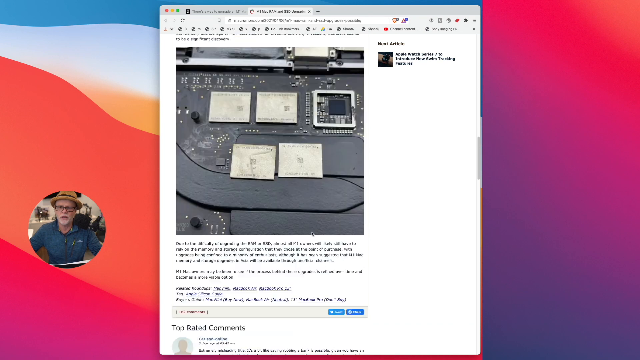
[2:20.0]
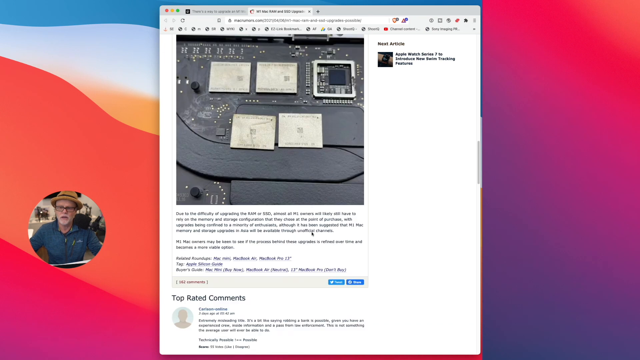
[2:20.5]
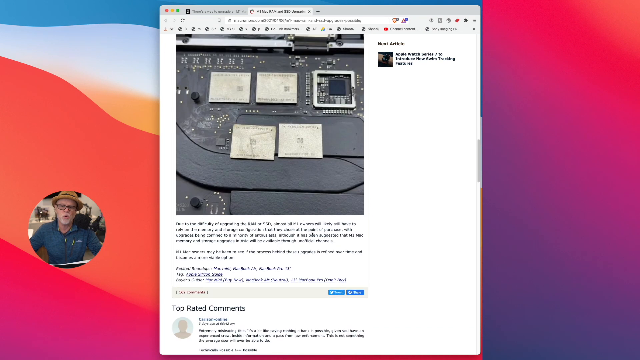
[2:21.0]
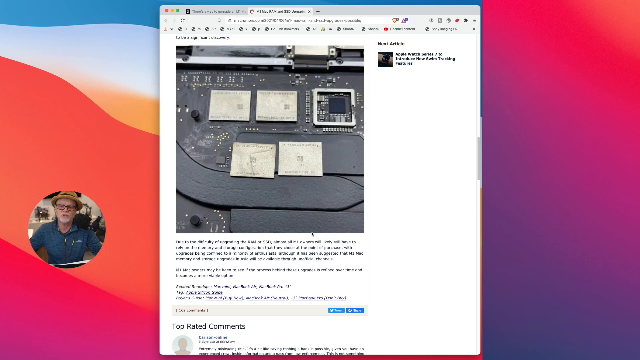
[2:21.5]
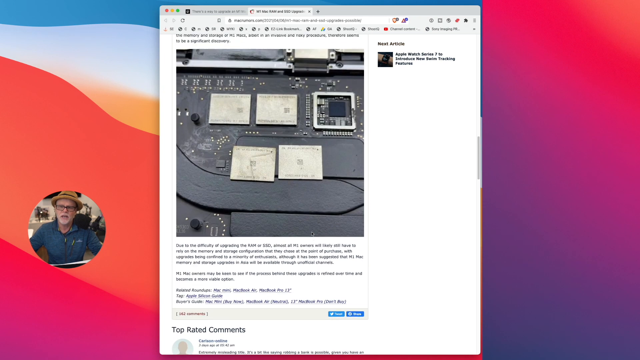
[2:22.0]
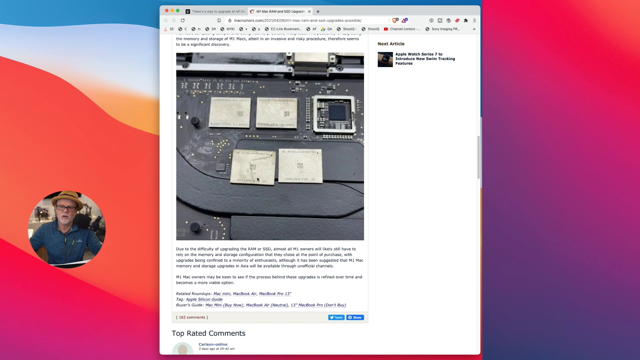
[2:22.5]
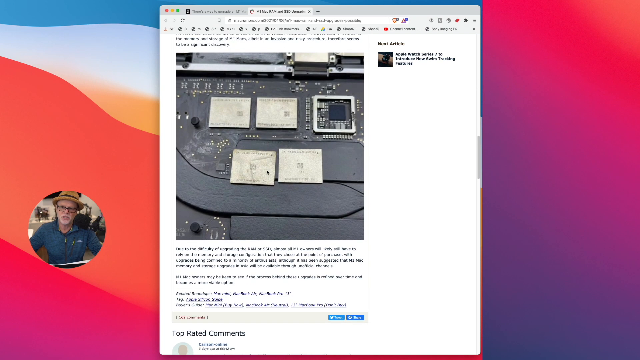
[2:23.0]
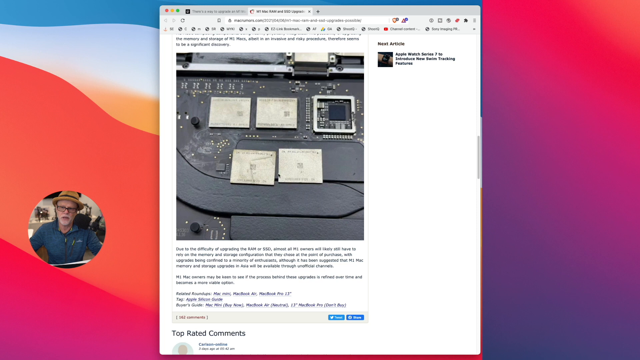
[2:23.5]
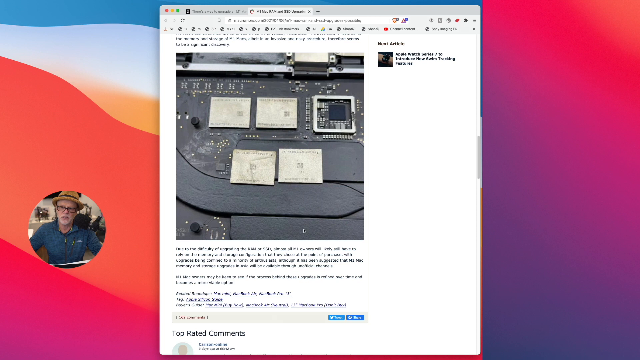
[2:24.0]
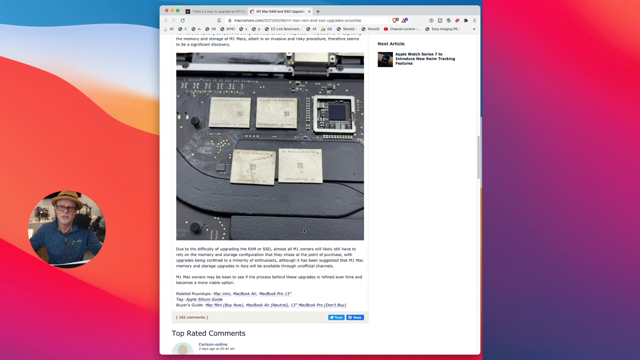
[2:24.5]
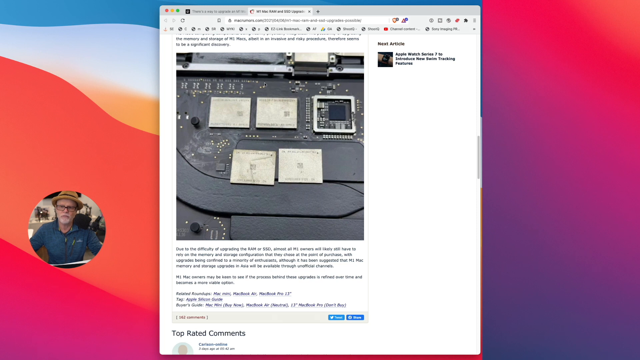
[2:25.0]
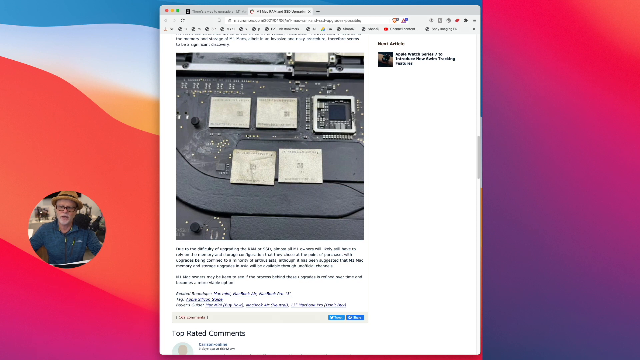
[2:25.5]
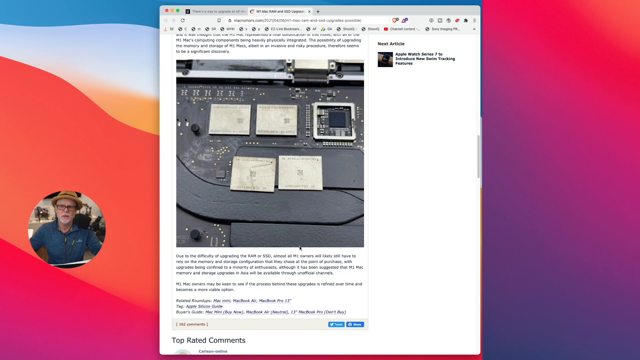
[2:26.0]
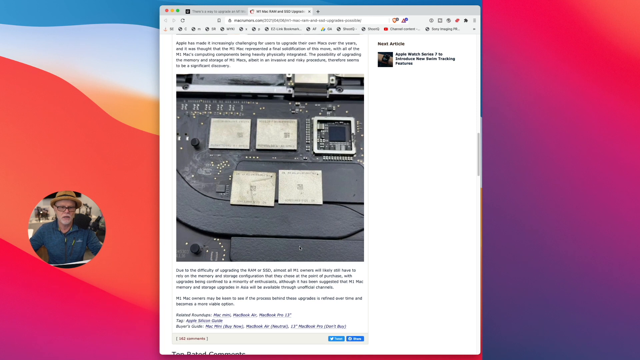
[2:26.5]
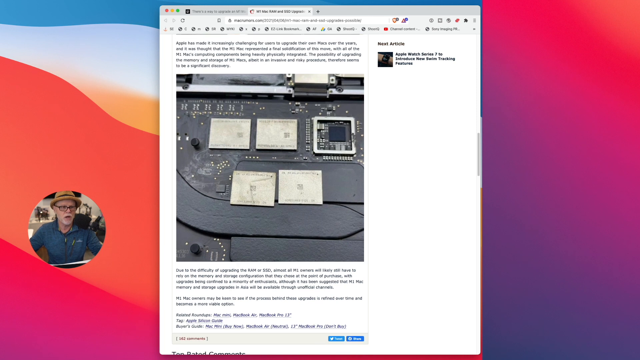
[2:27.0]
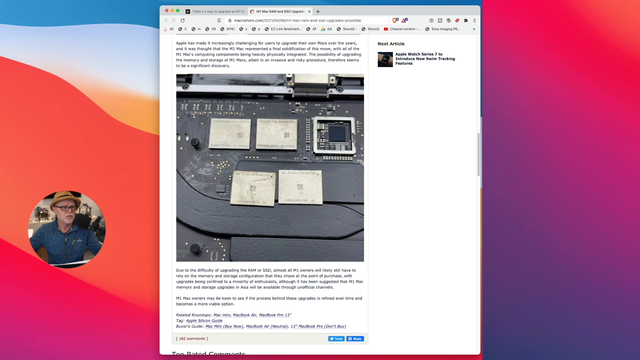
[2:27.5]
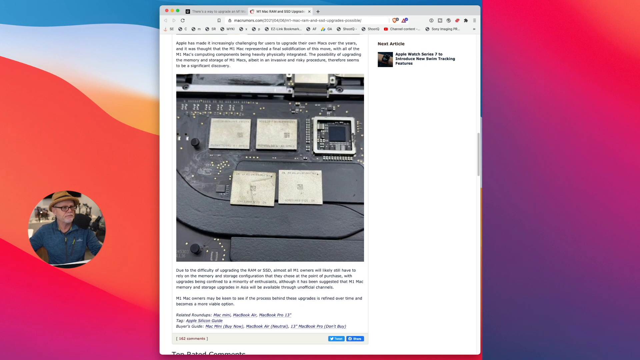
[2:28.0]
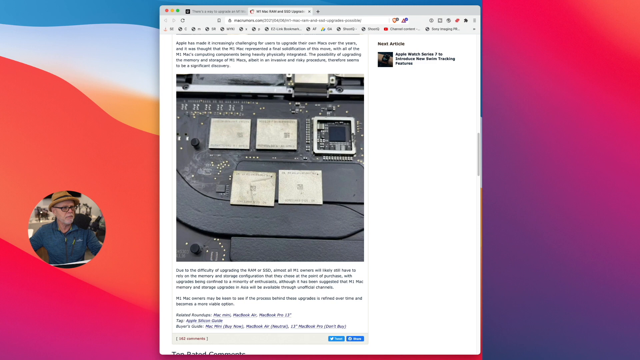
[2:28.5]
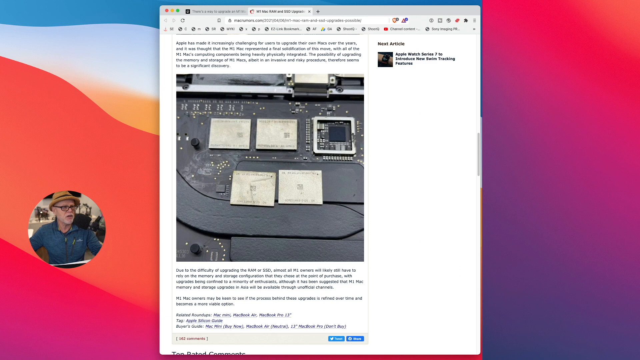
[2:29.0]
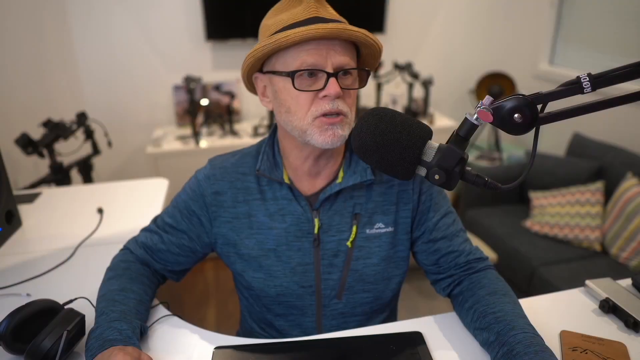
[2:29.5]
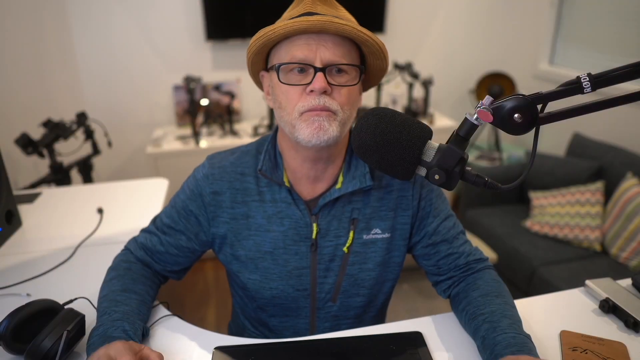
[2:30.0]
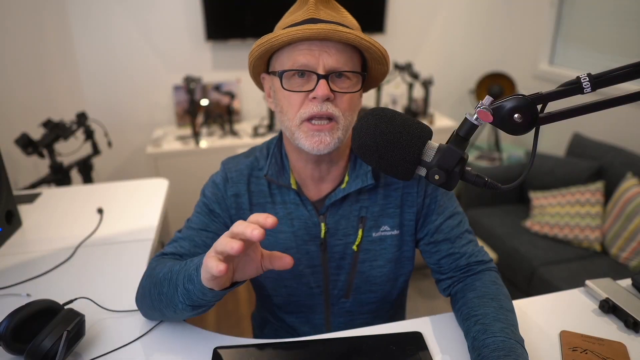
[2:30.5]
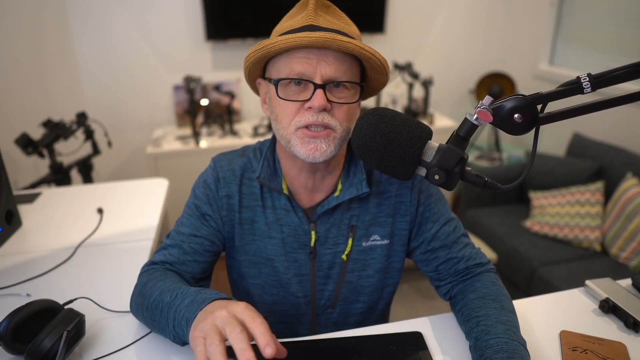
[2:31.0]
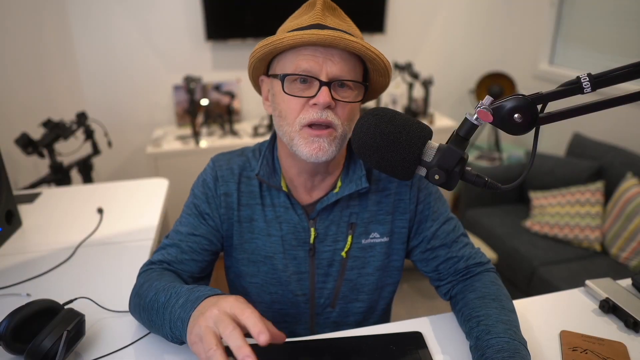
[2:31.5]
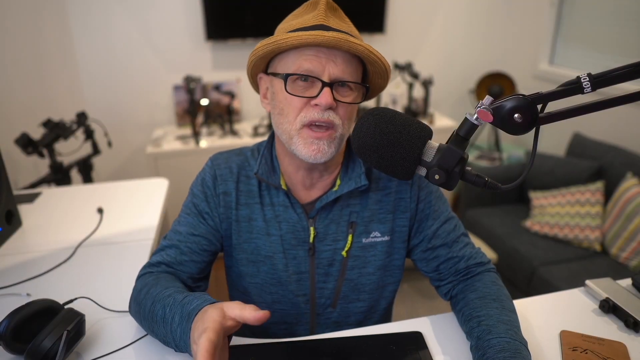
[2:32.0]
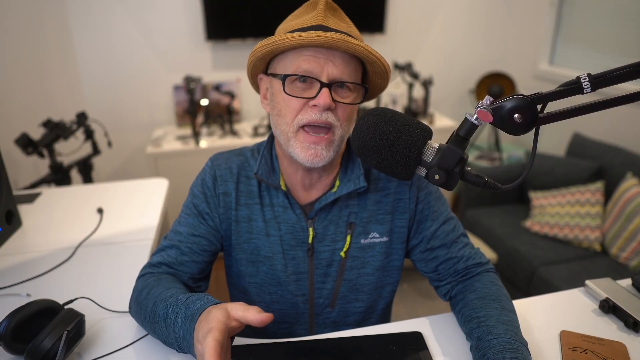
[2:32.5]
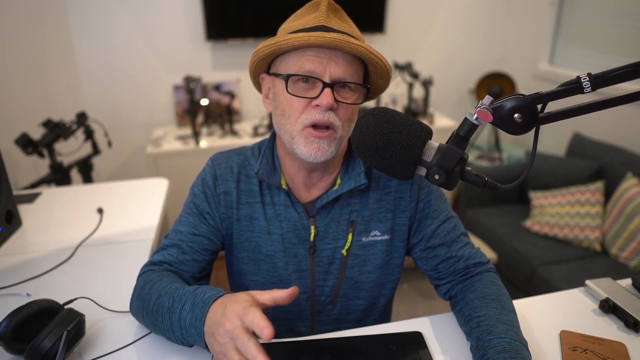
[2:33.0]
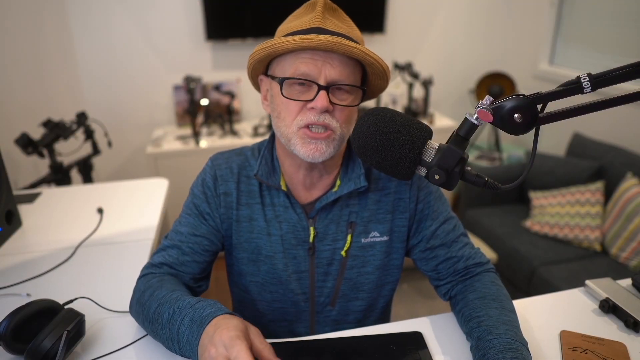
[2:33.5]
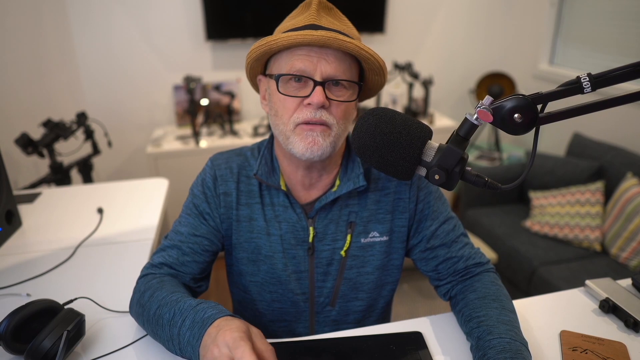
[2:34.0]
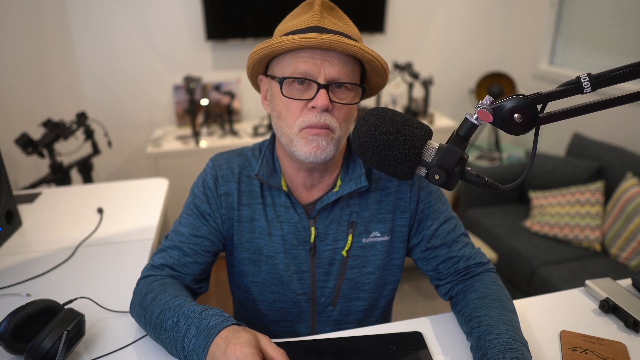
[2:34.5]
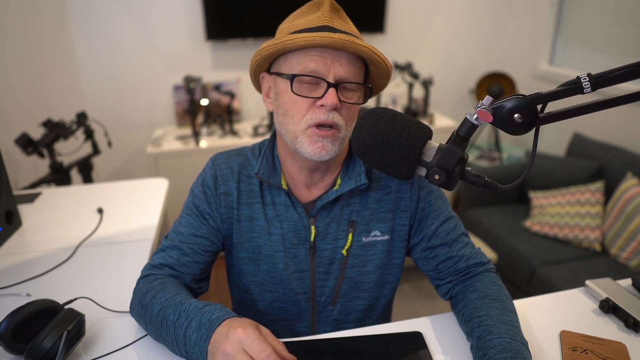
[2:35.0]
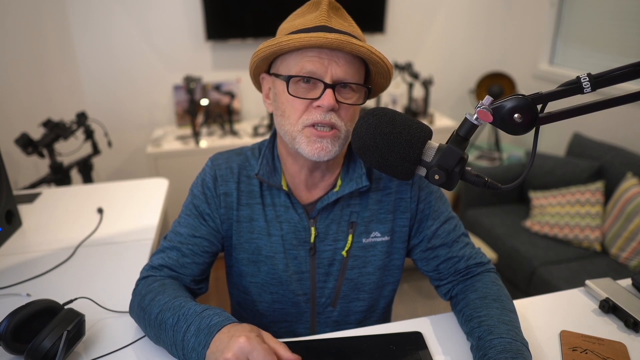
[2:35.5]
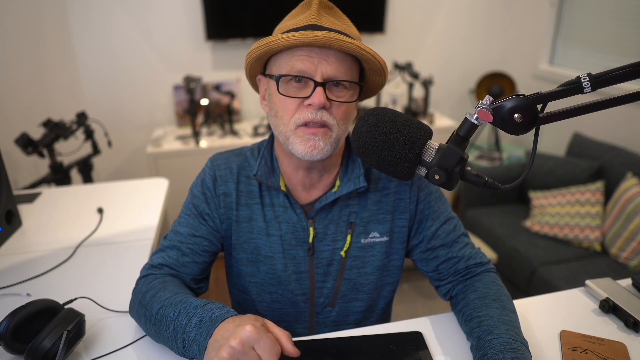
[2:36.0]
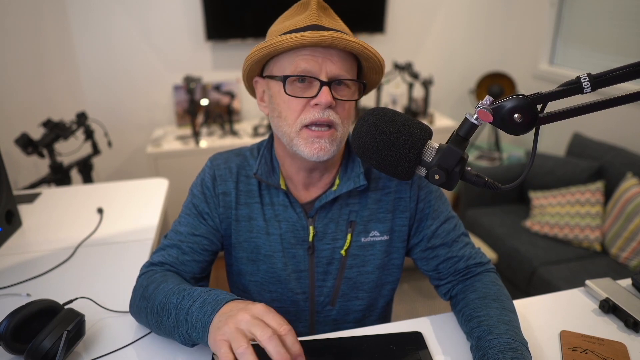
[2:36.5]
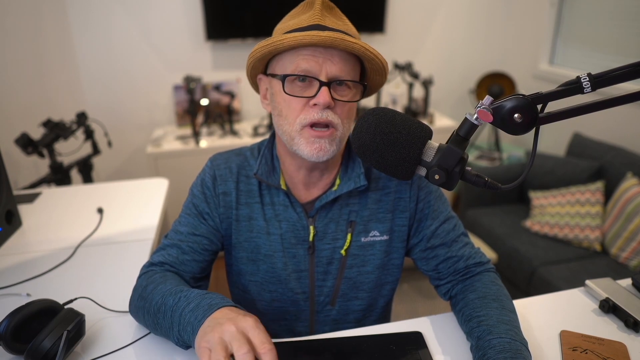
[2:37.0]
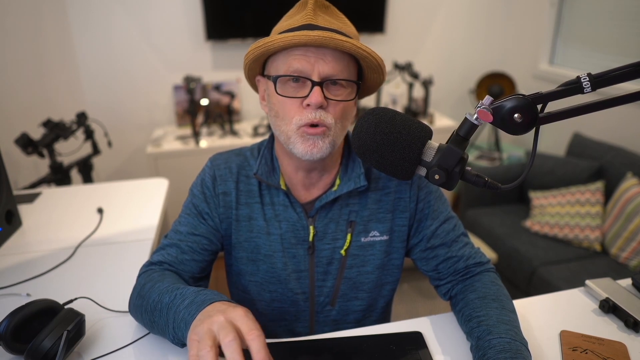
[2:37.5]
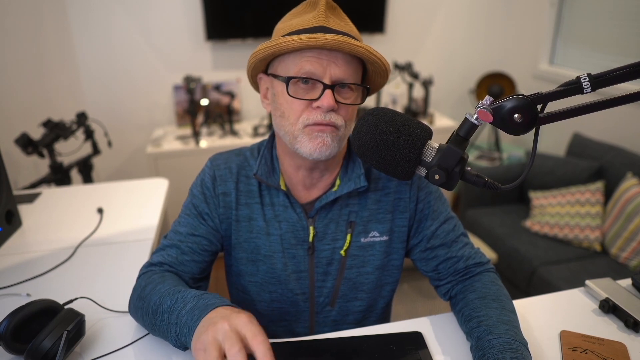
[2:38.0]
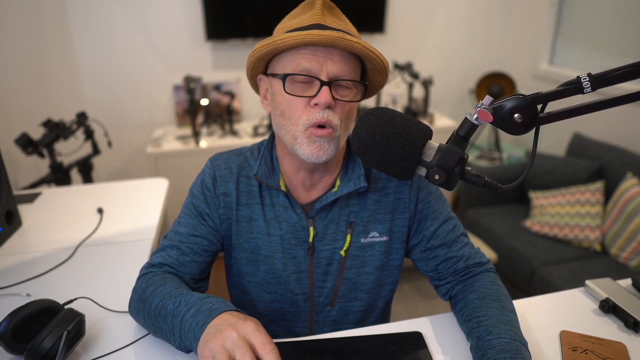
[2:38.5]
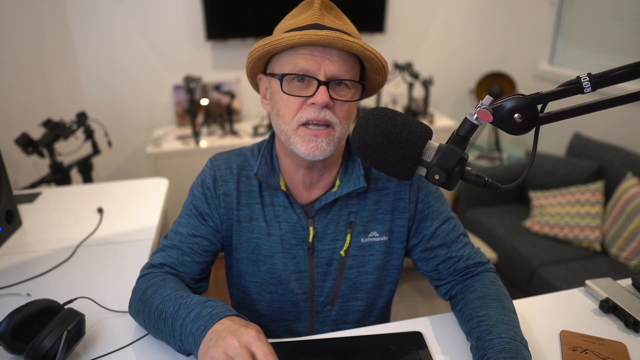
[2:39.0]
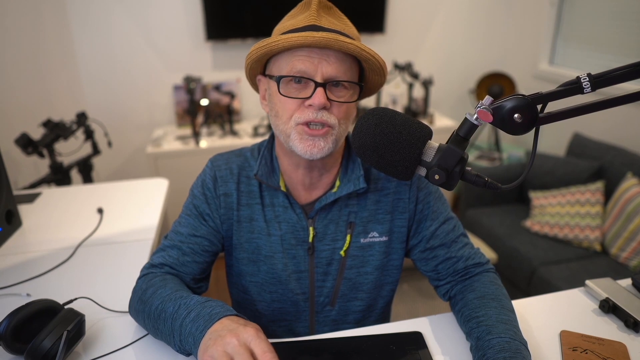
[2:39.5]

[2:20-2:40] An image shows rows of squares: three squares in the top row, two in the next, with one missing where it should be. The man talks and turns his head to the right side. Toward the end he exits the website and maximizes his view again, so the screen shows just him, still in the caramel-colored hat and dark-framed glasses with clear lenses, with the camera on the right side of the video. He keeps lifting his right hand up a little.